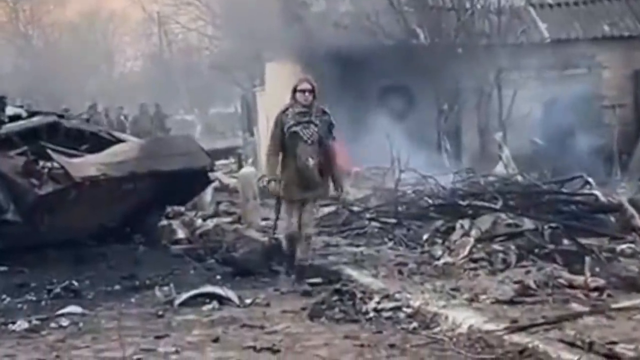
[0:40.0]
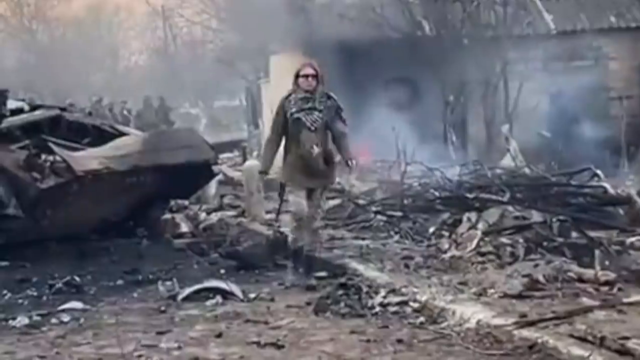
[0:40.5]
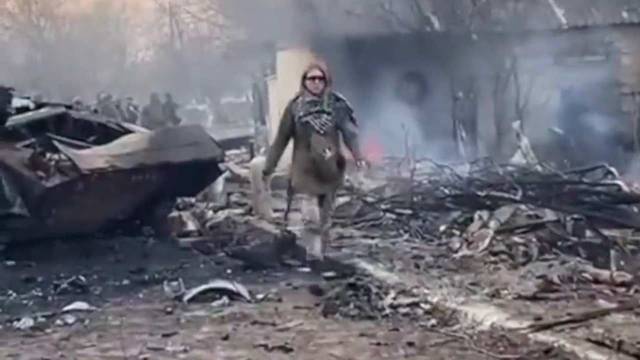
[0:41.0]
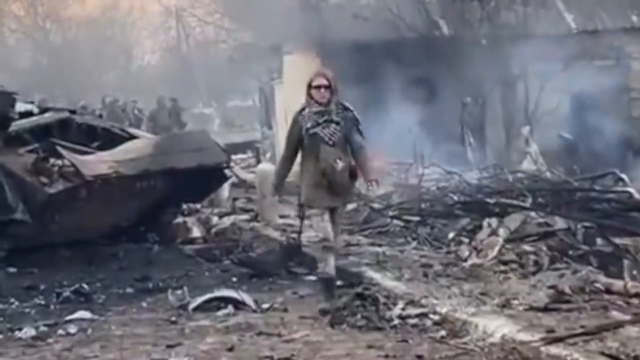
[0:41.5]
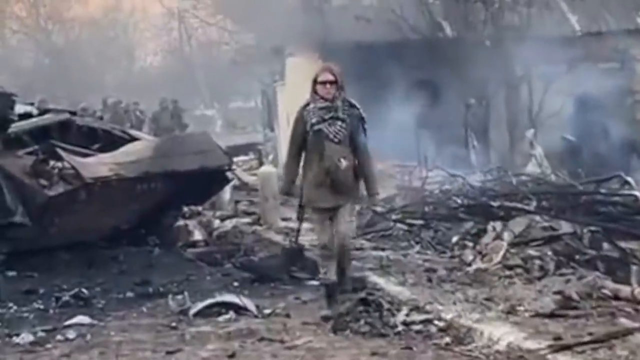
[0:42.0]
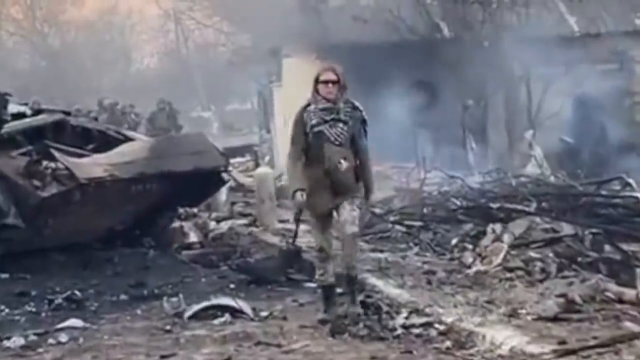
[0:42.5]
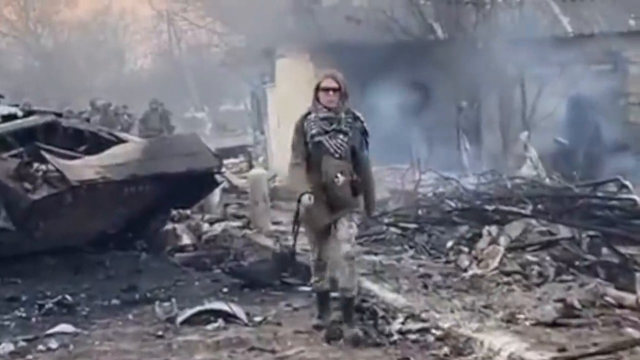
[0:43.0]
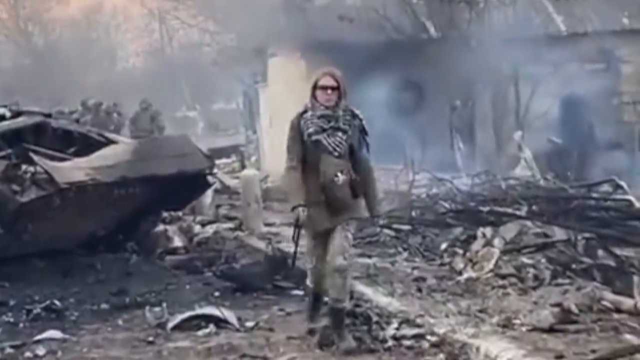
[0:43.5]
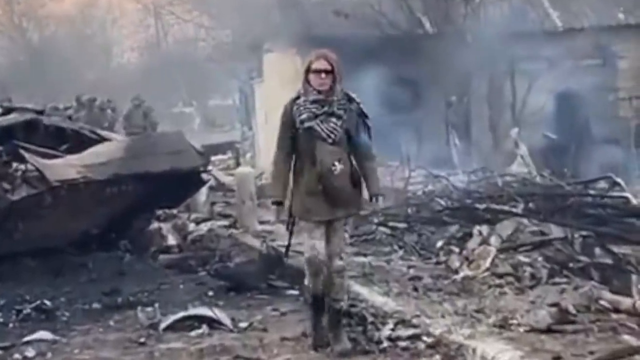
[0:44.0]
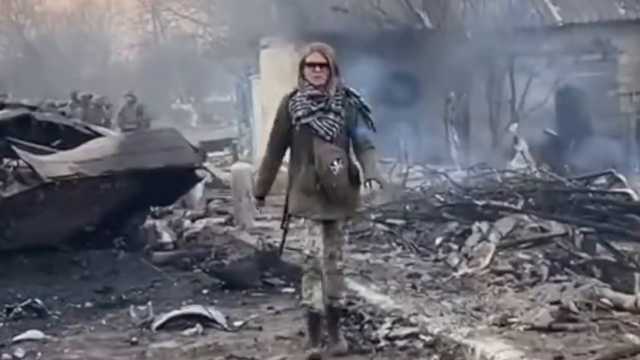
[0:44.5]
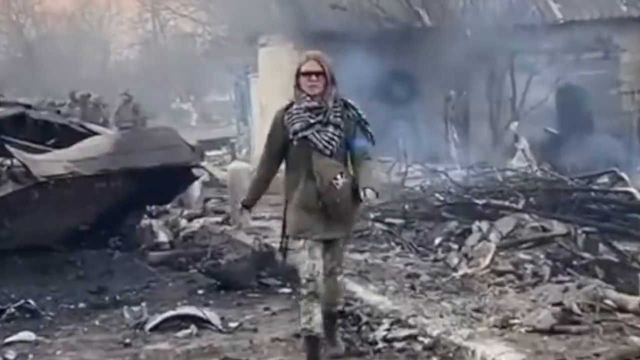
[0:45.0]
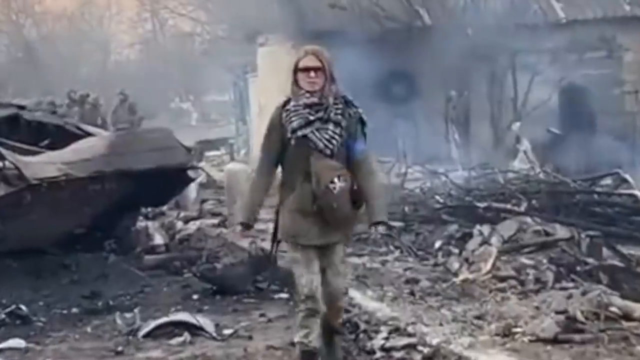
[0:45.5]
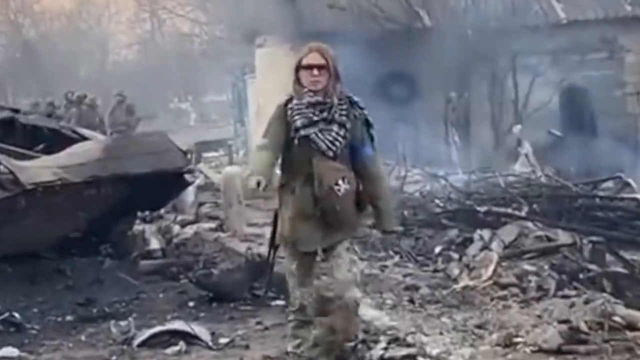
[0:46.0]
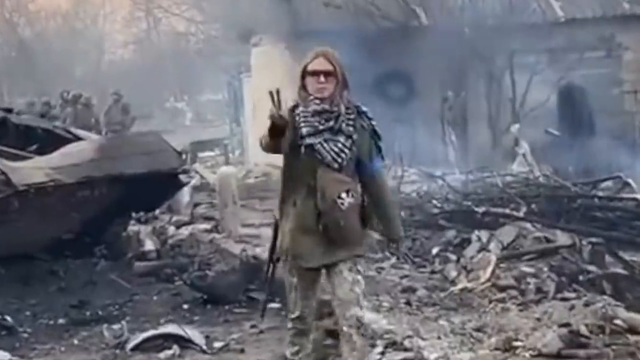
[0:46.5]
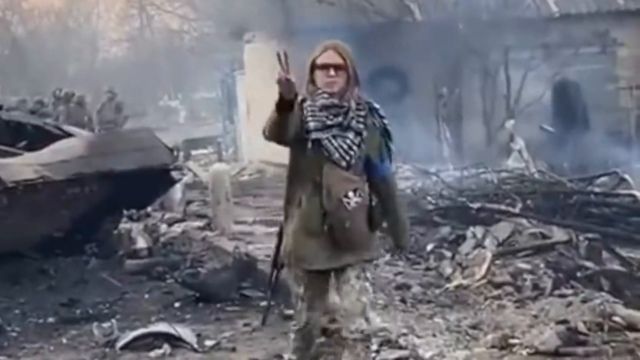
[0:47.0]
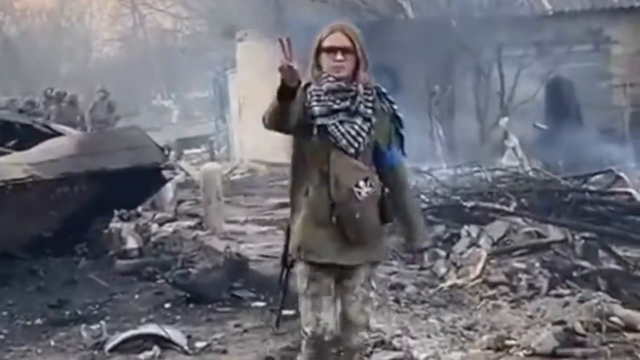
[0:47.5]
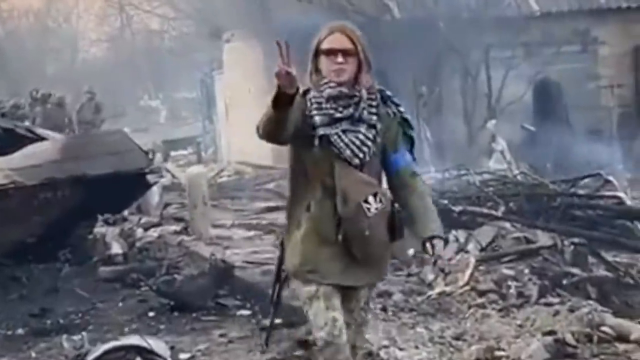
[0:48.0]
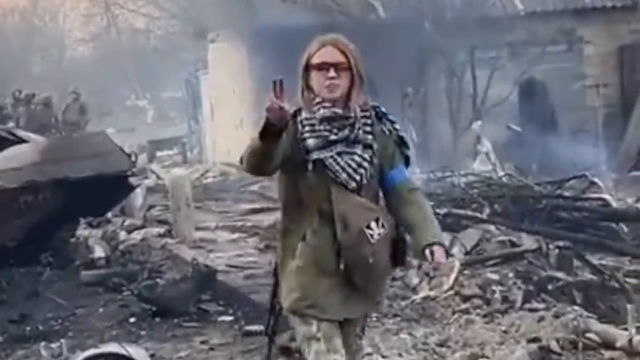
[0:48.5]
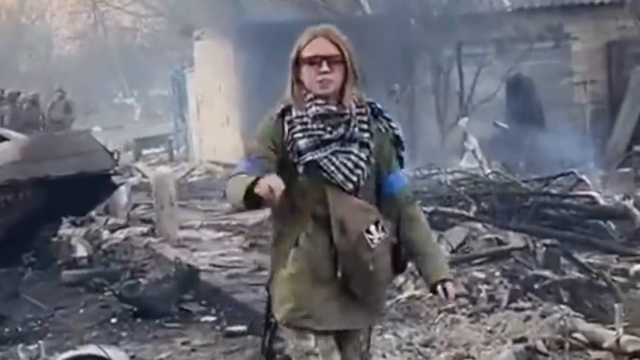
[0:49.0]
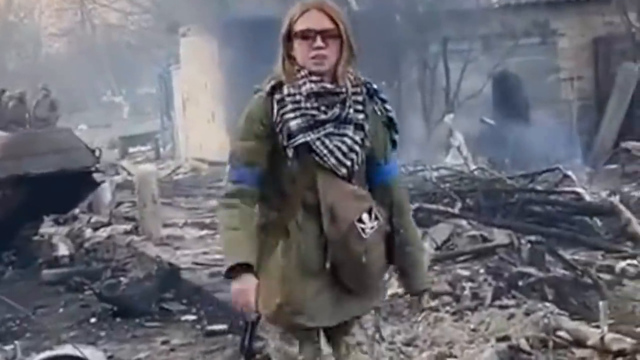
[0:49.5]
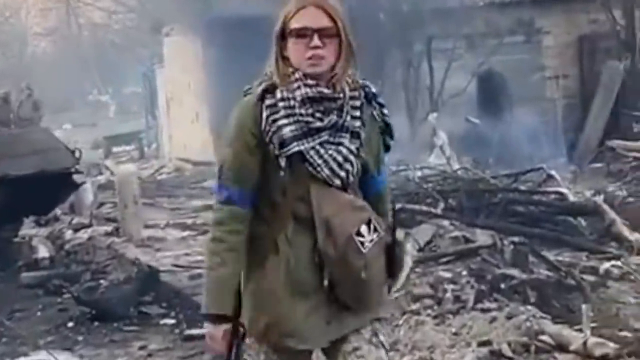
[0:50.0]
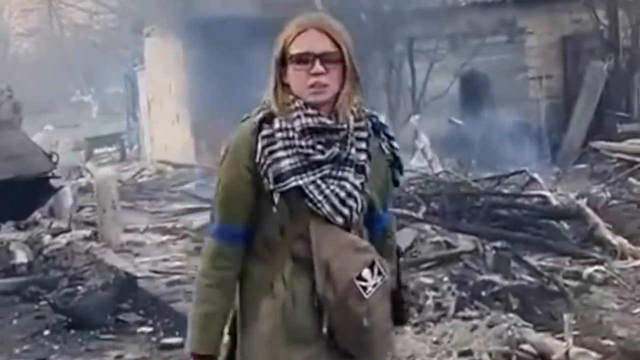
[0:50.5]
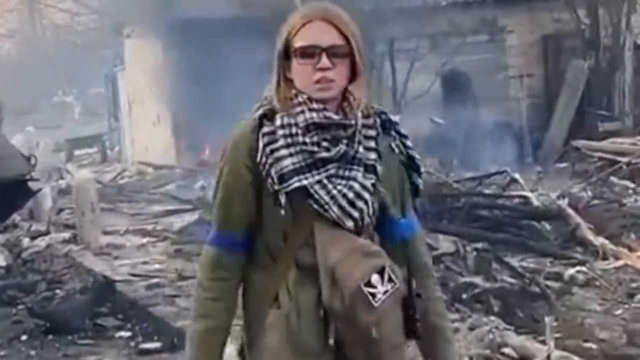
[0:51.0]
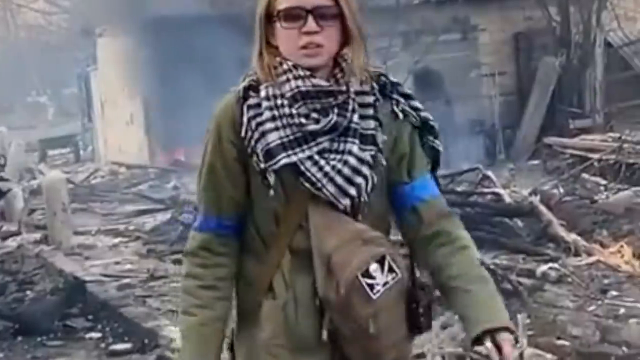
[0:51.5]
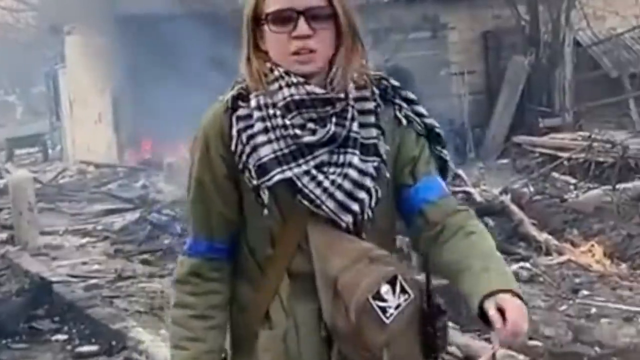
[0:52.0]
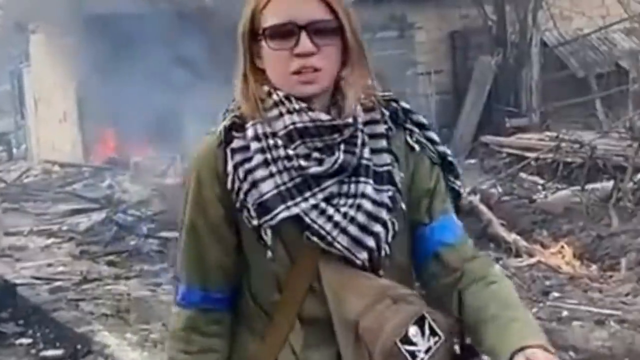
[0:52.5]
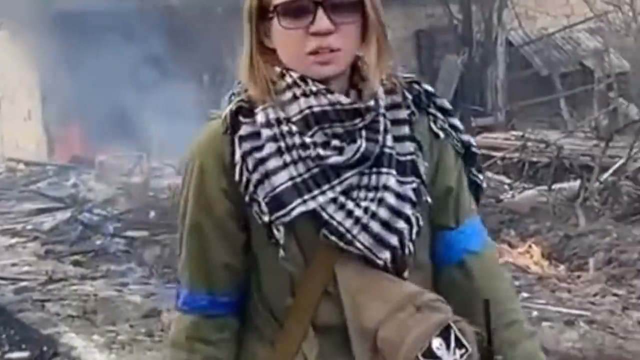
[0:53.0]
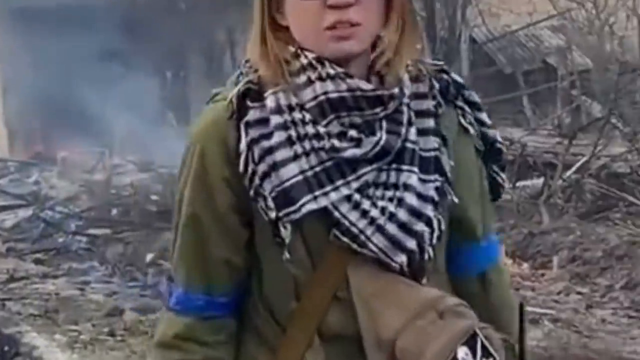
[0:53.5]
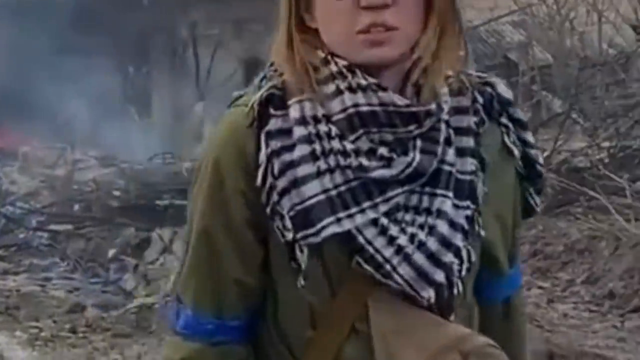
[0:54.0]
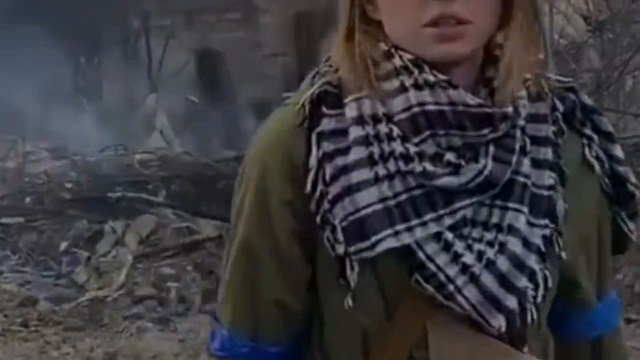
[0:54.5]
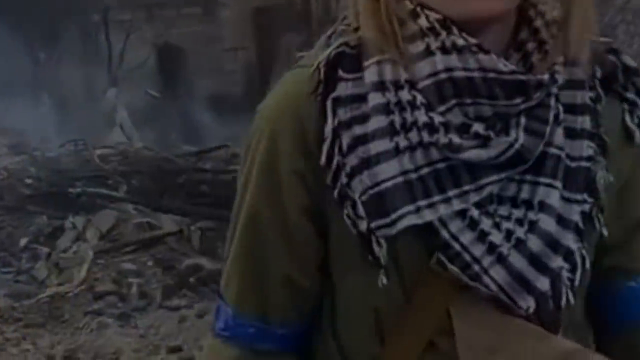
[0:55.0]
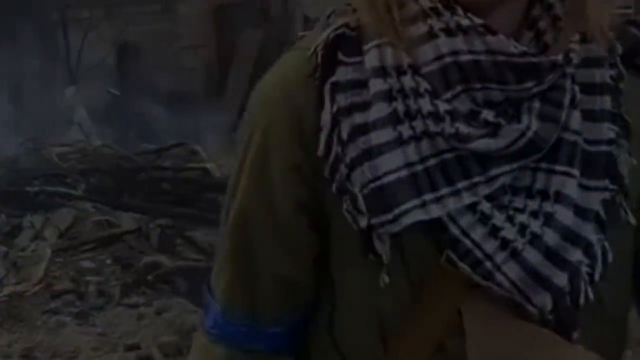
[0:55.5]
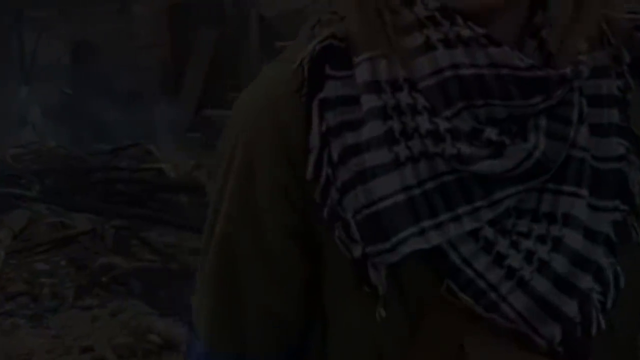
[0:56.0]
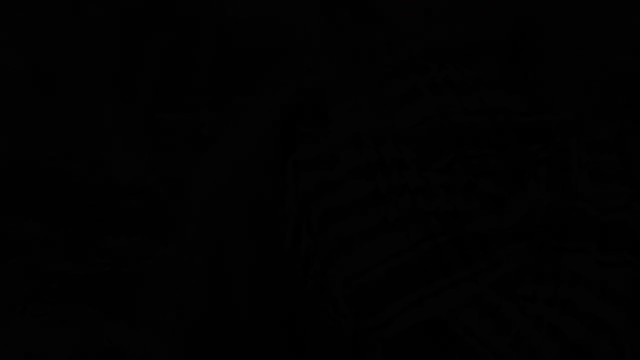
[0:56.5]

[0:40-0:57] More of the woman is shown as she appears to walk toward the camera. She wears a sort of scarf, sunglasses, an army jacket and blue bandanas around her arms, and has a rifle strapped to her back. She flashes a peace sign to the camera as she walks toward it. She looks like she has been part of the fighting.